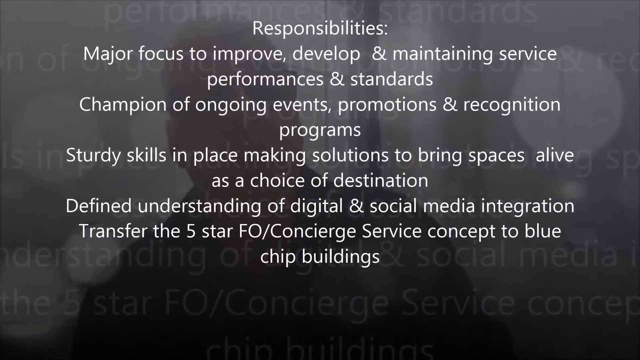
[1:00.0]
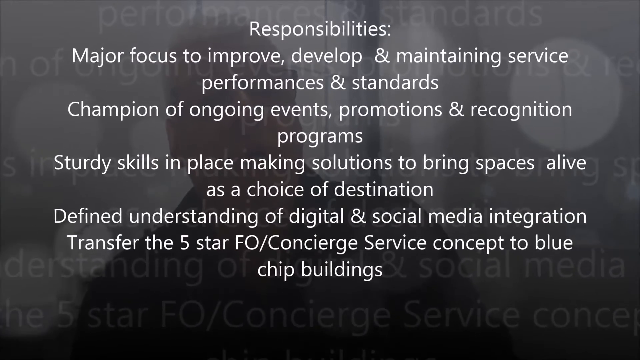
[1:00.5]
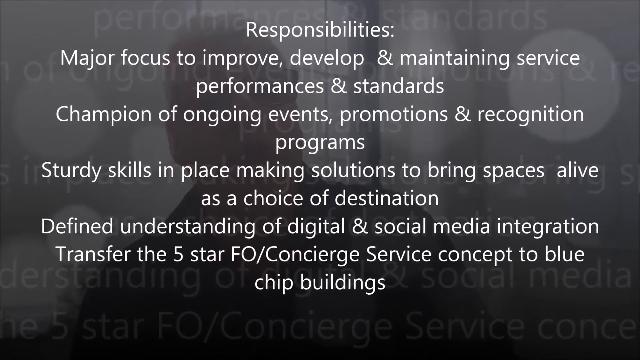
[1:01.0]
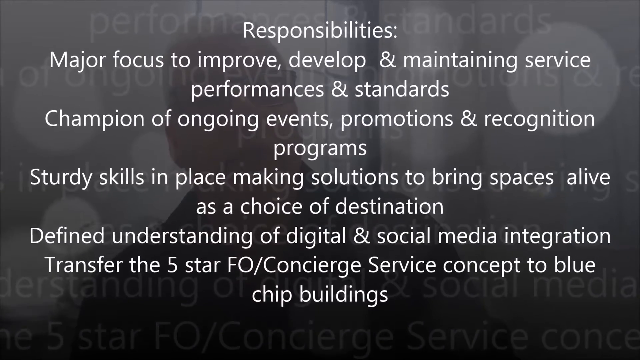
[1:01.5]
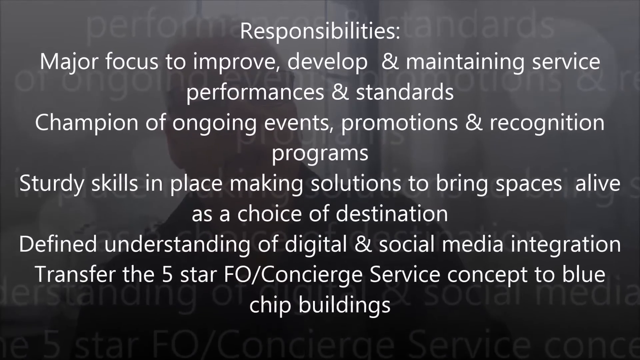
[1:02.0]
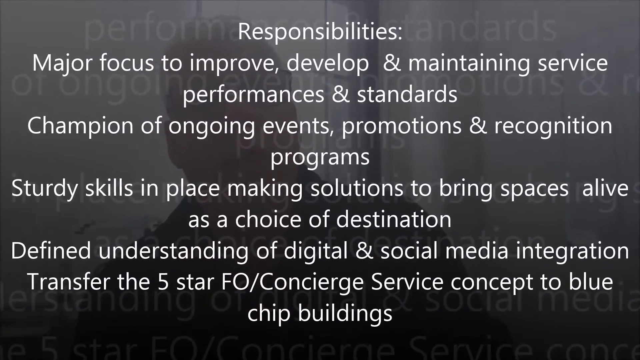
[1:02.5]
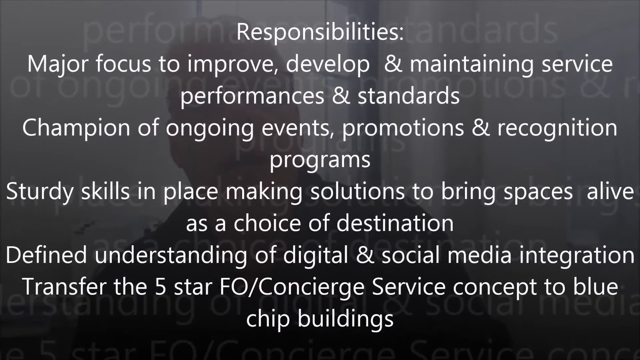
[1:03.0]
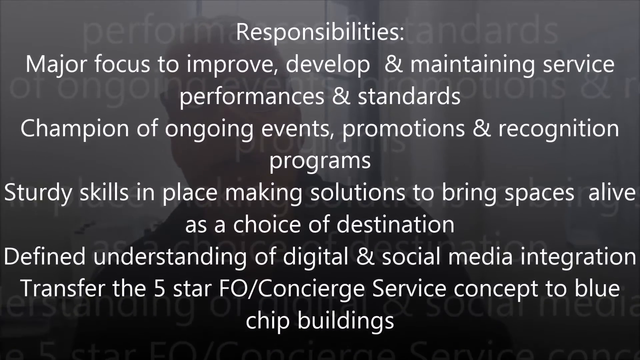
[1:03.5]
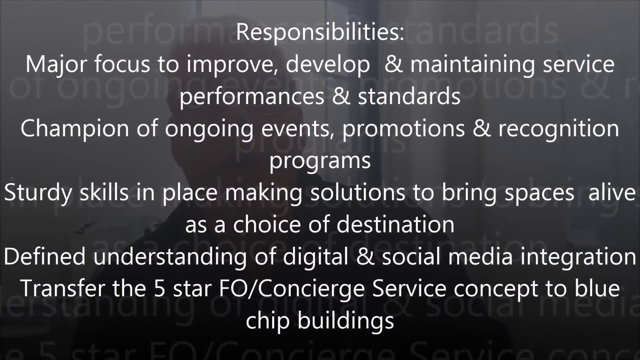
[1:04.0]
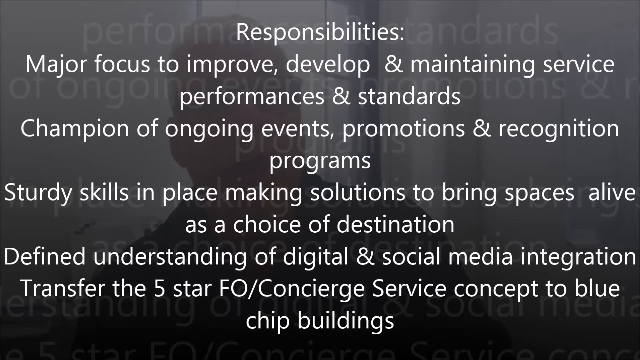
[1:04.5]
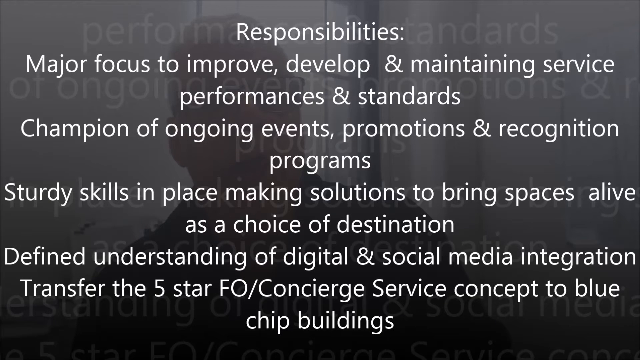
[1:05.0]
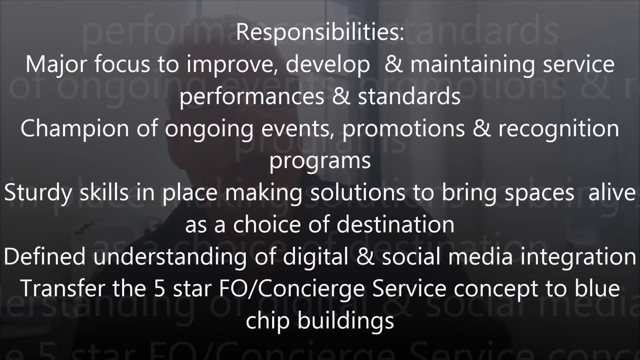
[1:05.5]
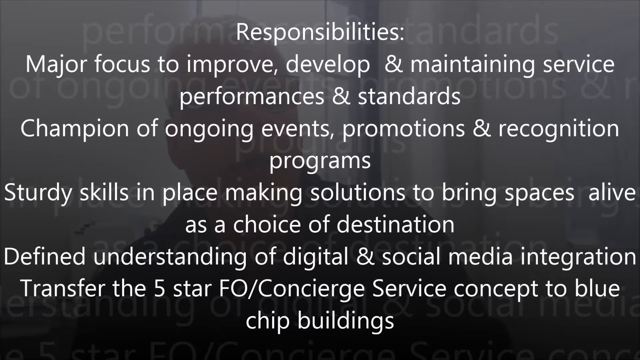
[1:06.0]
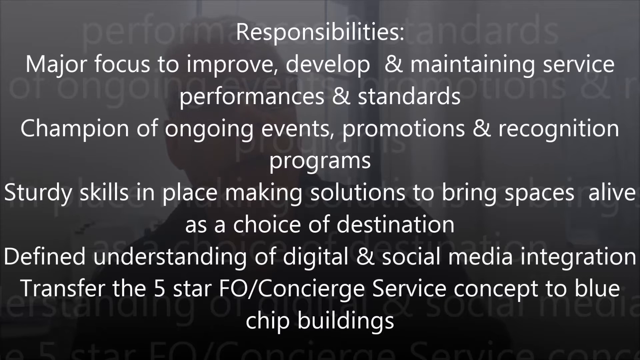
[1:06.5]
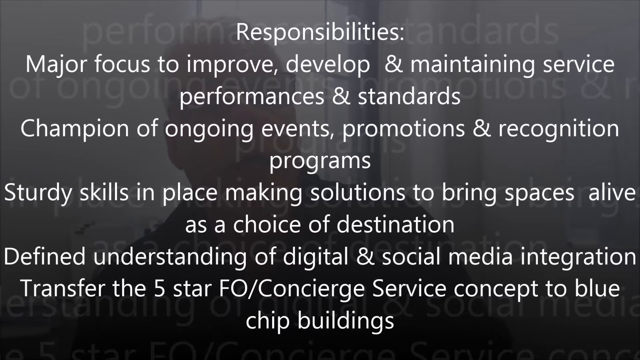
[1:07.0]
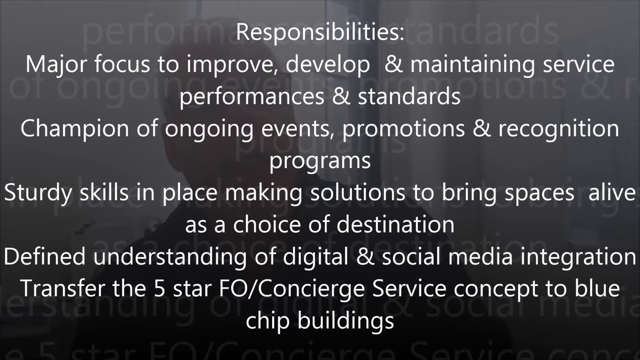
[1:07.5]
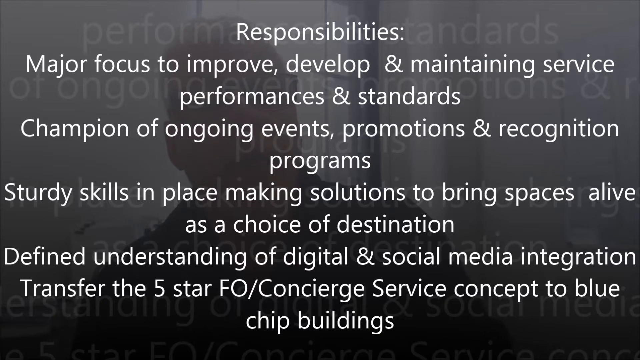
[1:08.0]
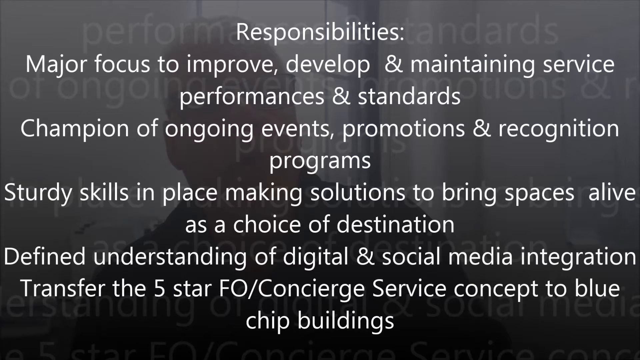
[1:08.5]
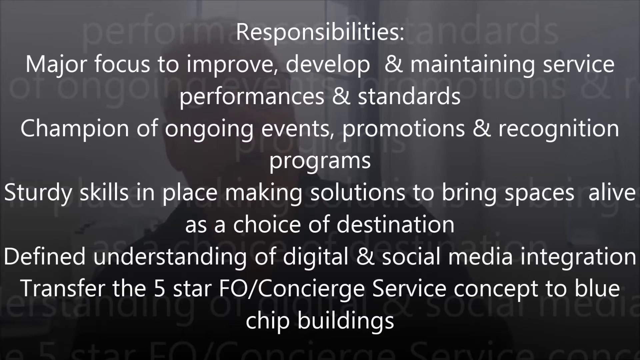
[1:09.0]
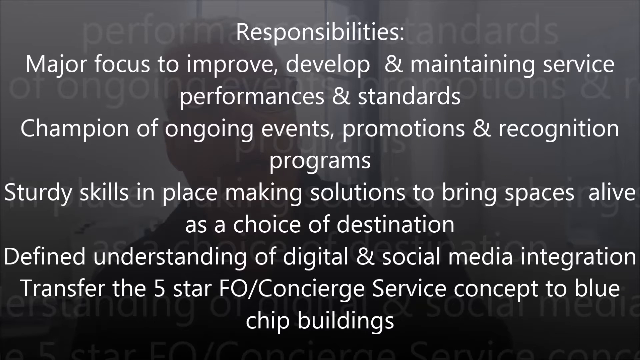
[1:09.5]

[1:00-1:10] The man who is talking is shown faded in the background while white text on the screen describes the responsibilities of the person to be hired, mentioning improving service performance and encouraging the company's events. The faded background also shows a number of circles that look like faded shadows of circles, along with what appears to be a zoomed, faded version of the on-screen text.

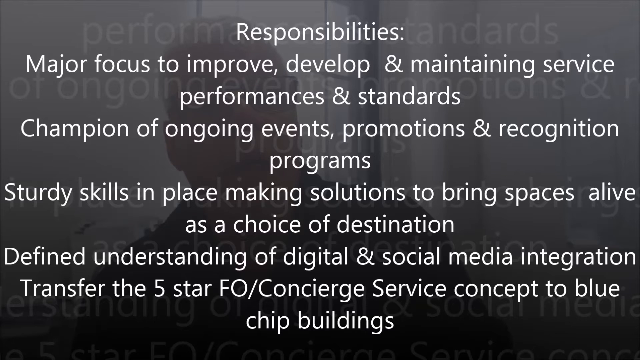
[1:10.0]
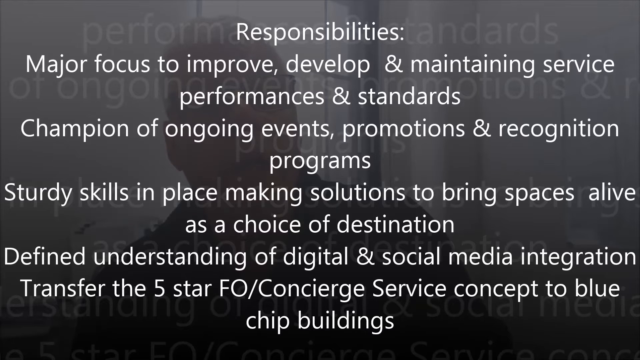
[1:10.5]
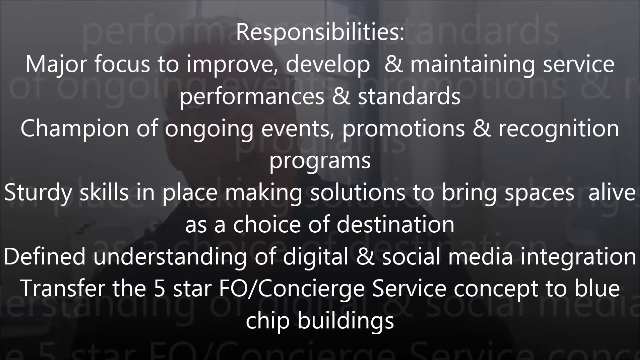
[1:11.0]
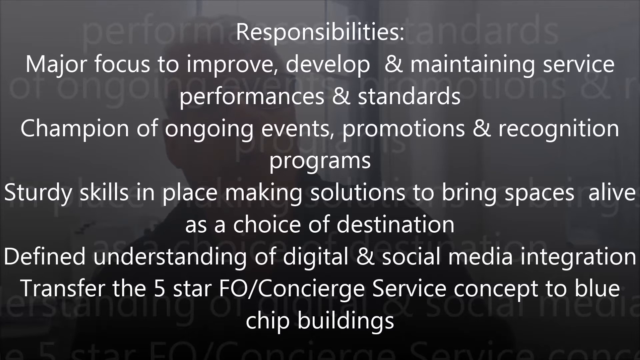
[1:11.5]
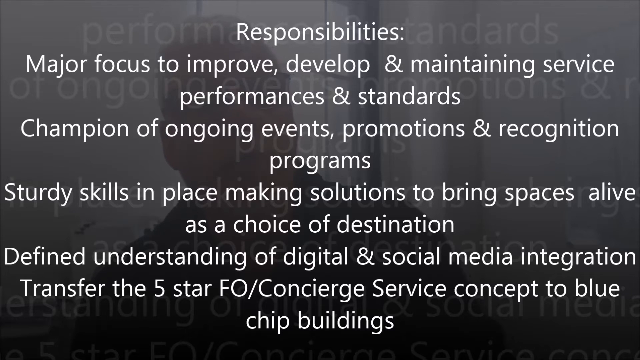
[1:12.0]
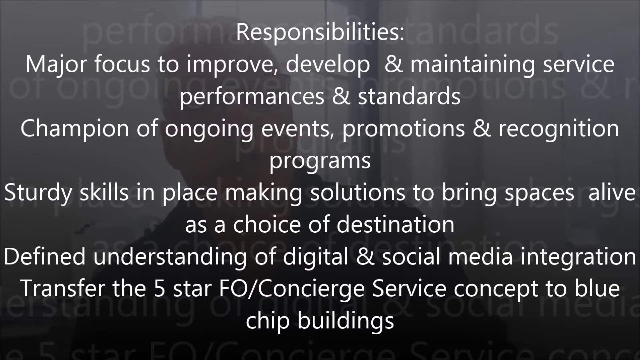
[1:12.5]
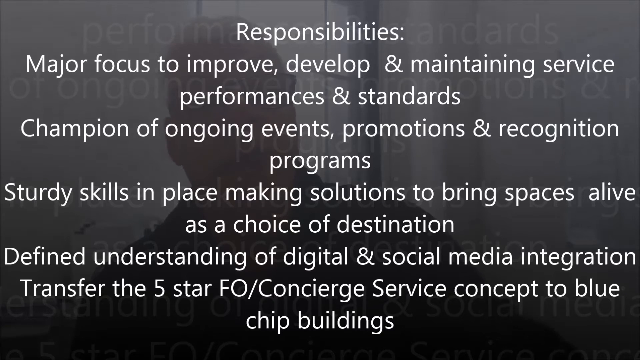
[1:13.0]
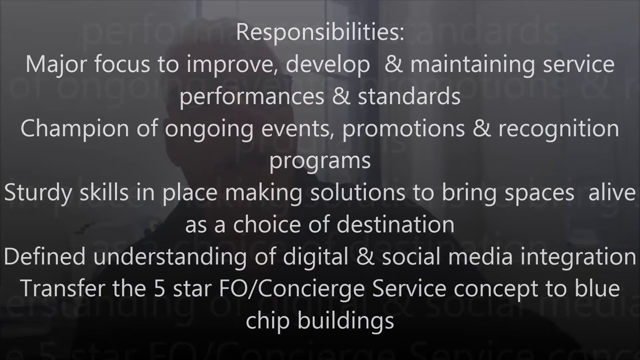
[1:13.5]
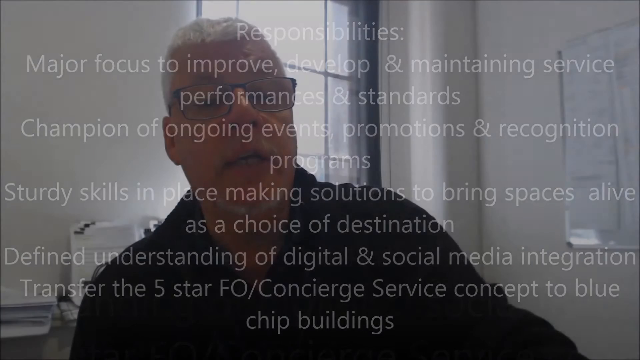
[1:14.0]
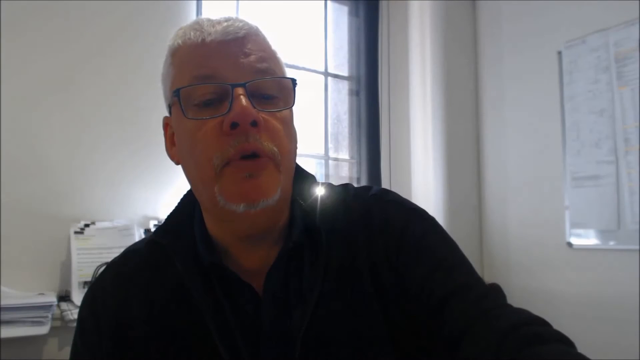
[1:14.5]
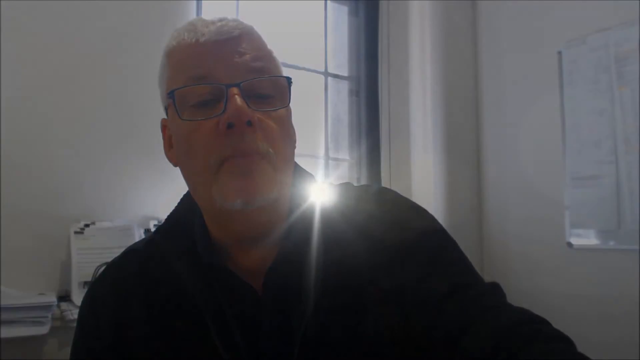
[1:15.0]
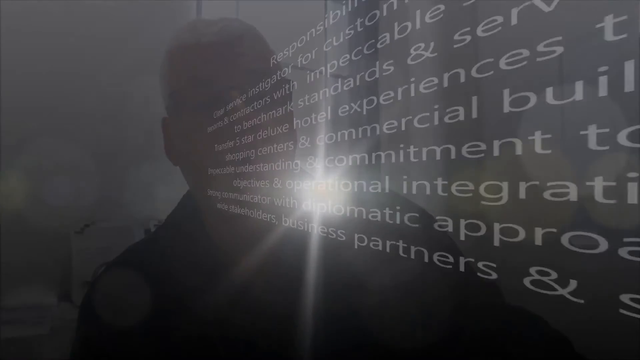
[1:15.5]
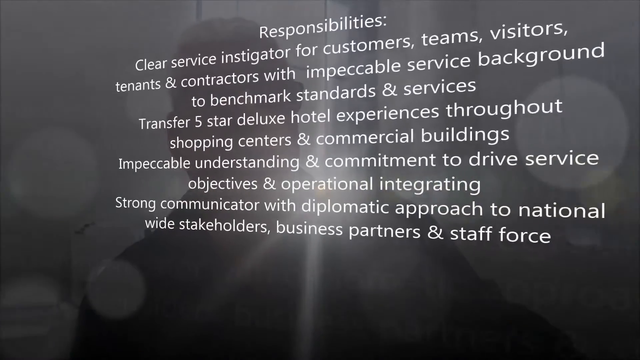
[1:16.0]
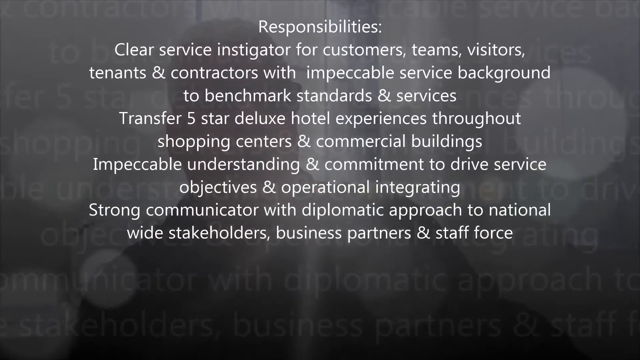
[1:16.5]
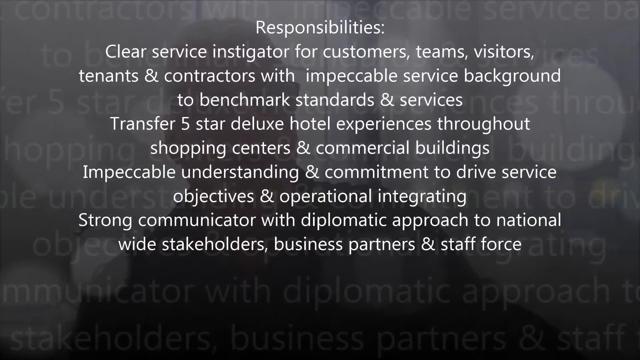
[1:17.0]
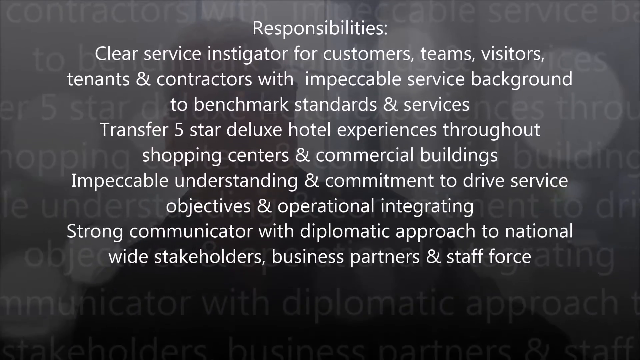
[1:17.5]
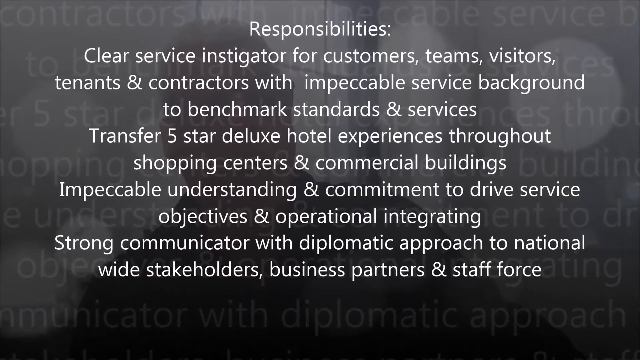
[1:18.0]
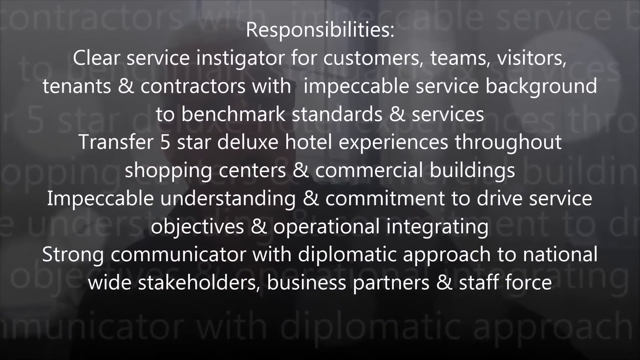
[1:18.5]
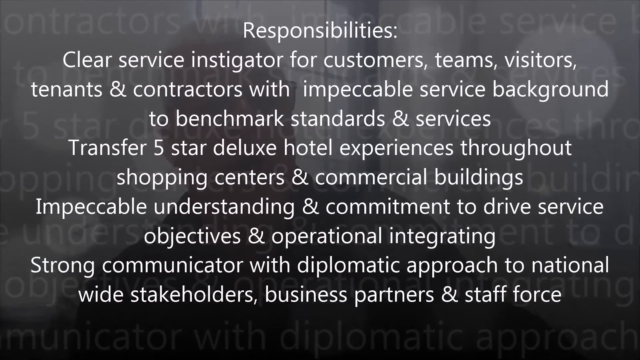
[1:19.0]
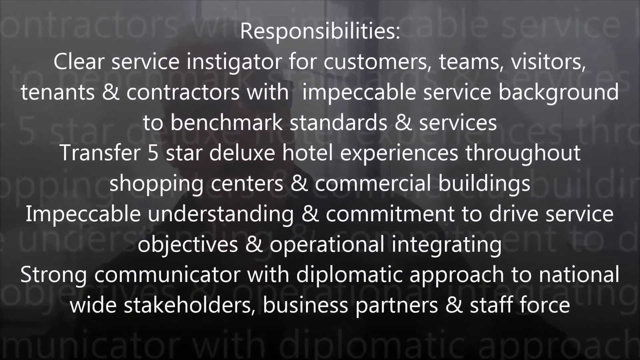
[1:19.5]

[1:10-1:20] The screen of responsibilities for the position continues, going into more detail. The text mentions concierge service and possibly a hotel. The man who is talking is faded in the background, along with a faded, zoomed-in version of the on-screen text. The text is white, and there seem to be two different sets of text. The view slowly zooms in; either it switches to another set of text, or it zooms out quickly and zooms in again on the responsibilities text.